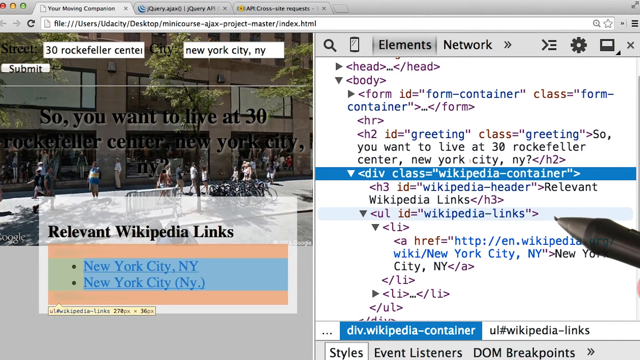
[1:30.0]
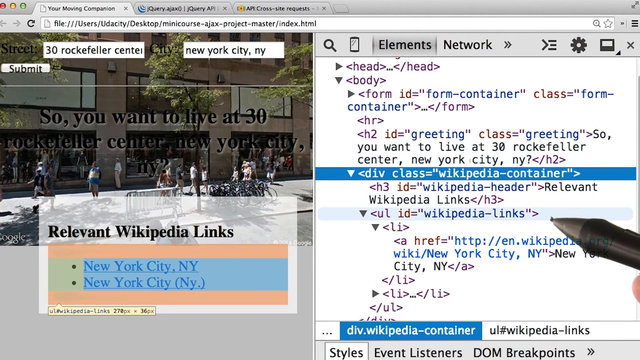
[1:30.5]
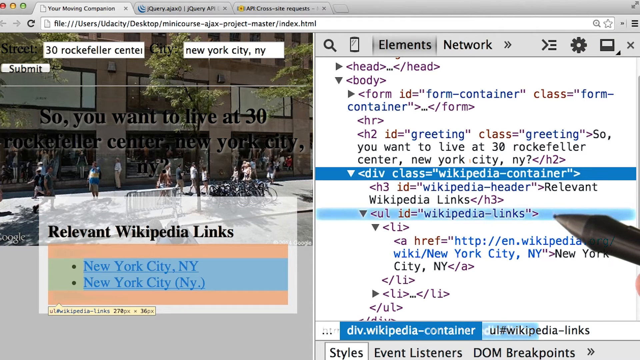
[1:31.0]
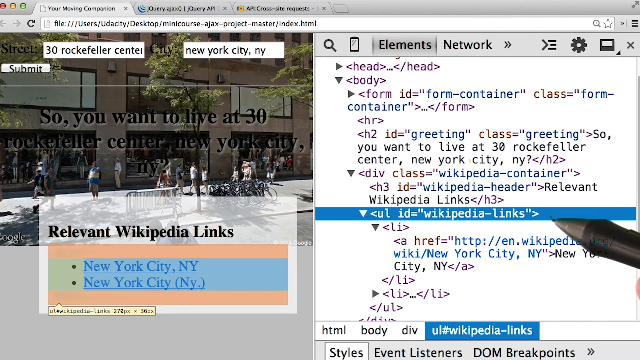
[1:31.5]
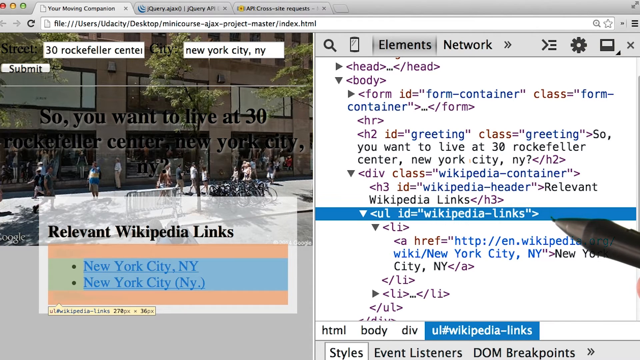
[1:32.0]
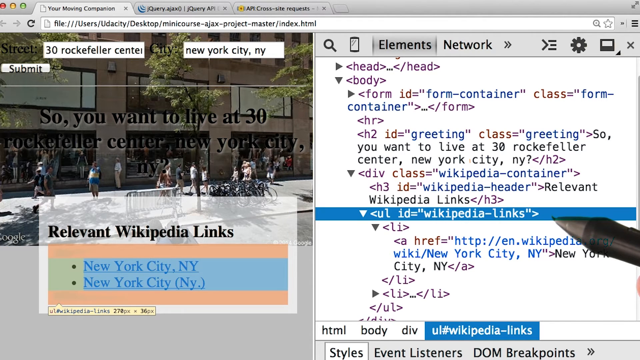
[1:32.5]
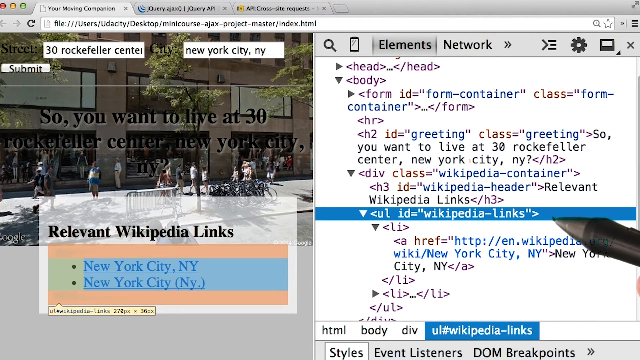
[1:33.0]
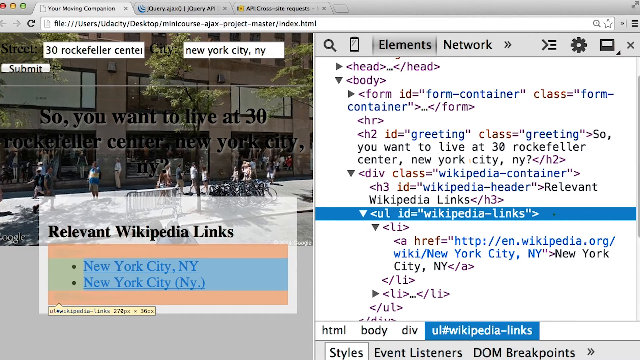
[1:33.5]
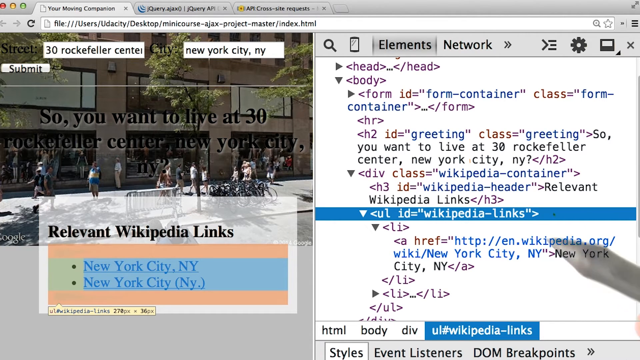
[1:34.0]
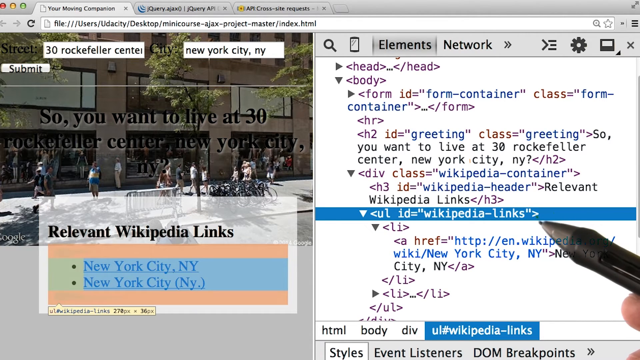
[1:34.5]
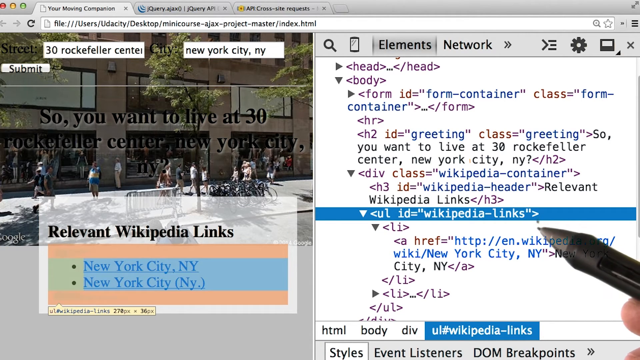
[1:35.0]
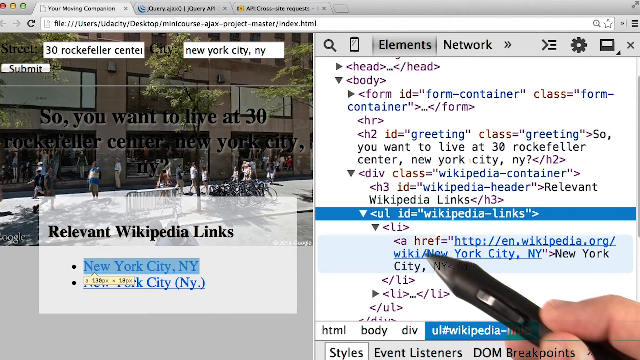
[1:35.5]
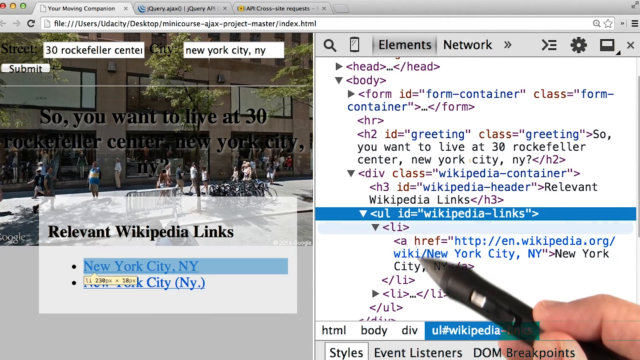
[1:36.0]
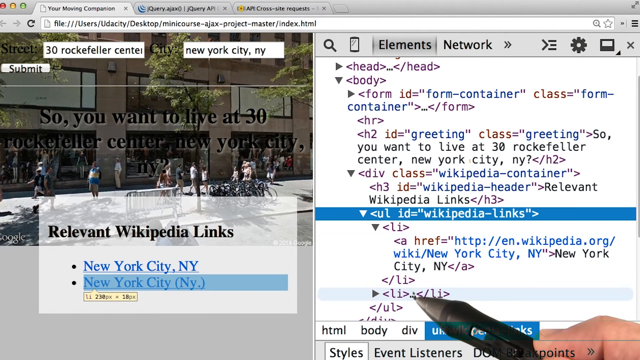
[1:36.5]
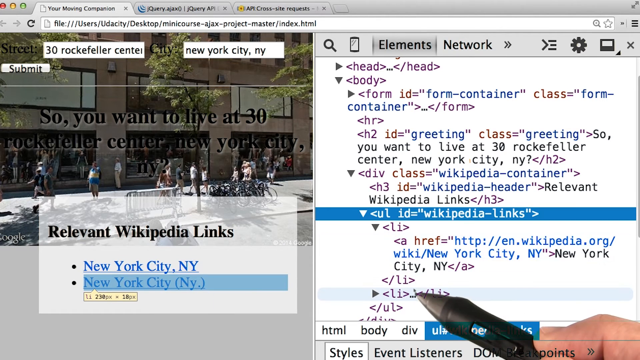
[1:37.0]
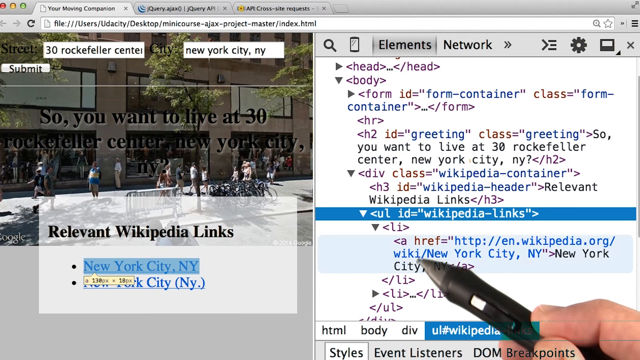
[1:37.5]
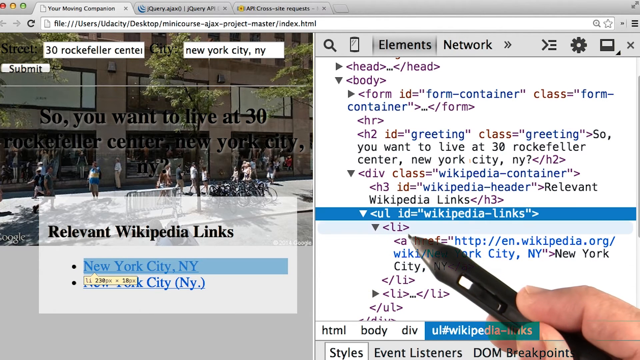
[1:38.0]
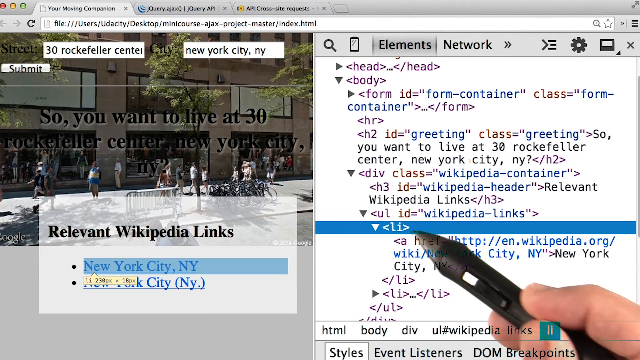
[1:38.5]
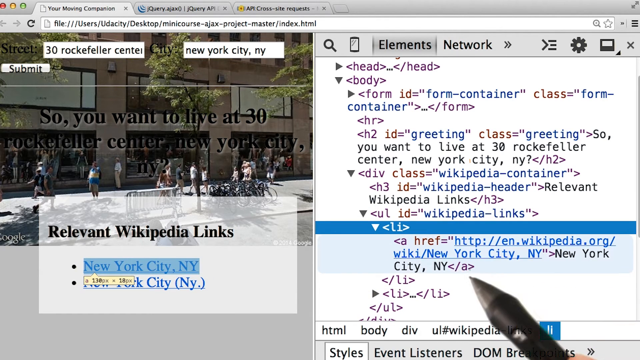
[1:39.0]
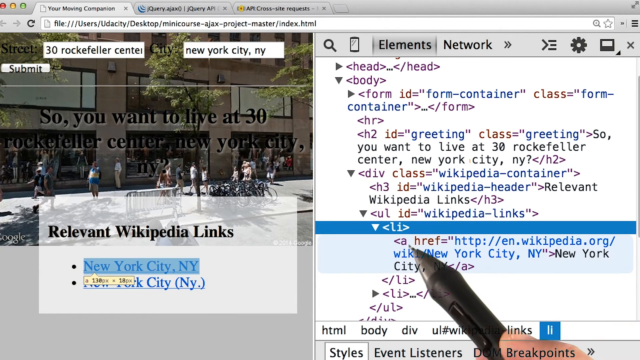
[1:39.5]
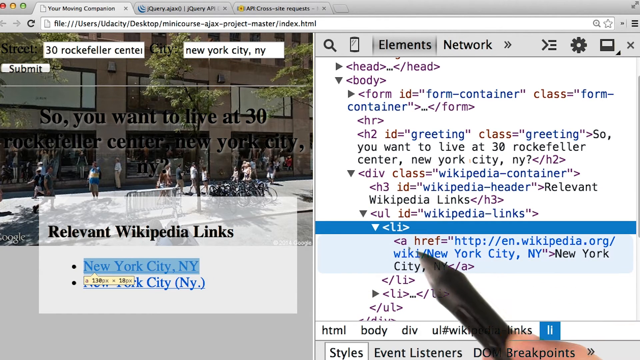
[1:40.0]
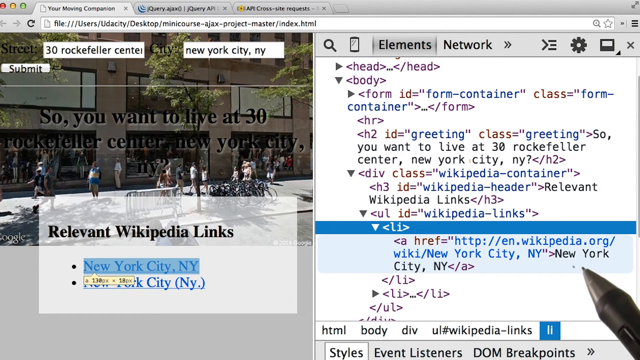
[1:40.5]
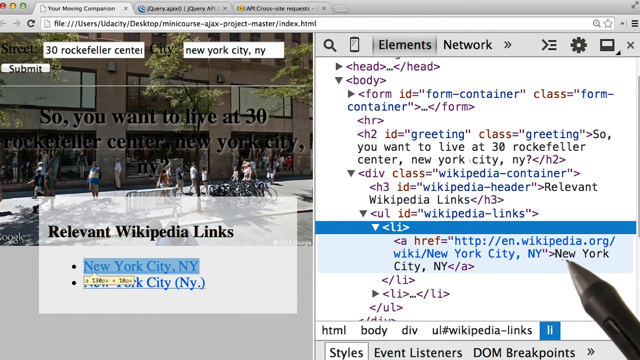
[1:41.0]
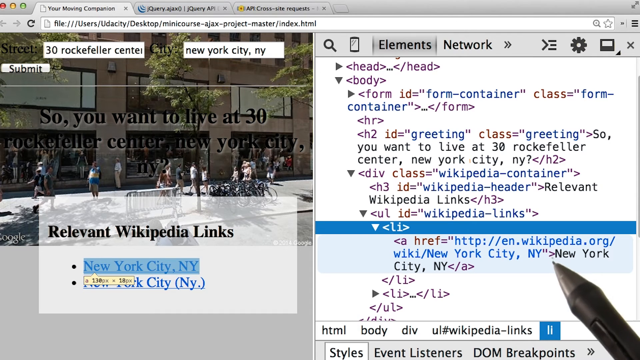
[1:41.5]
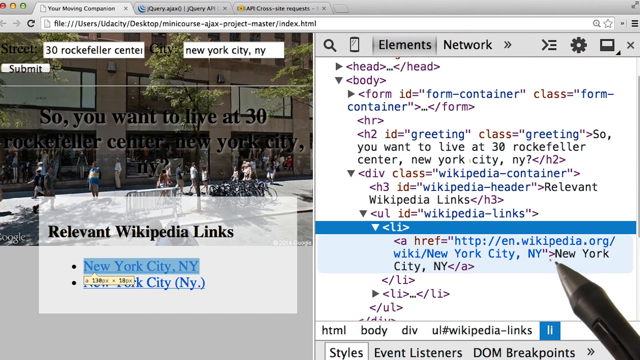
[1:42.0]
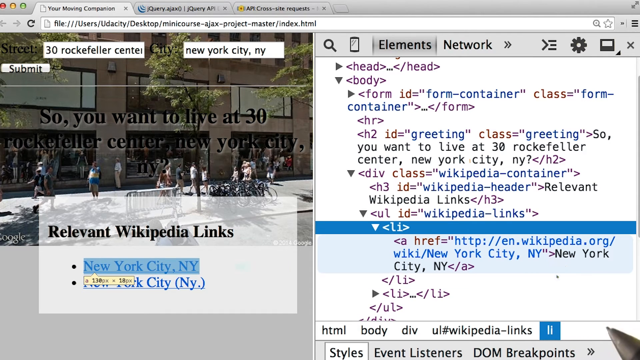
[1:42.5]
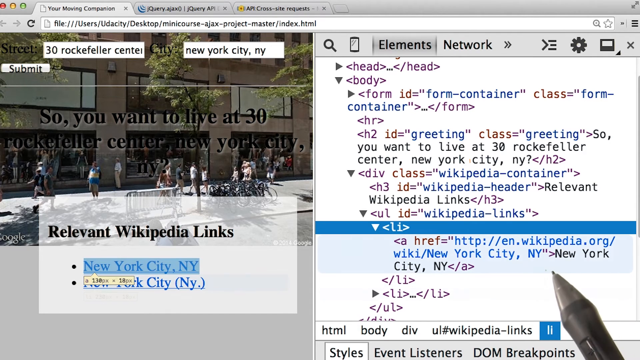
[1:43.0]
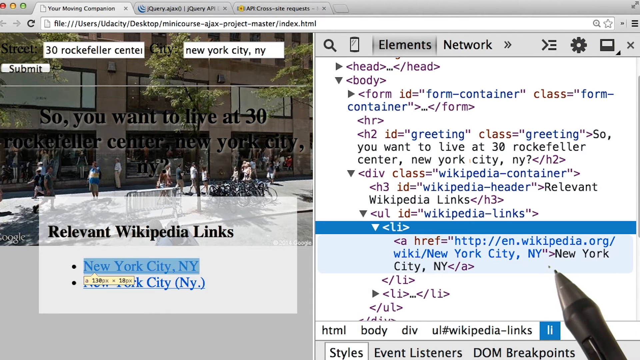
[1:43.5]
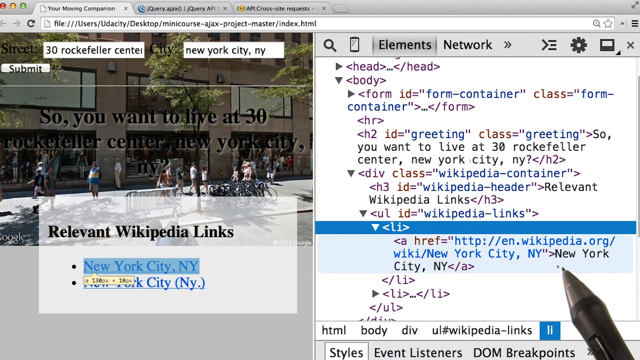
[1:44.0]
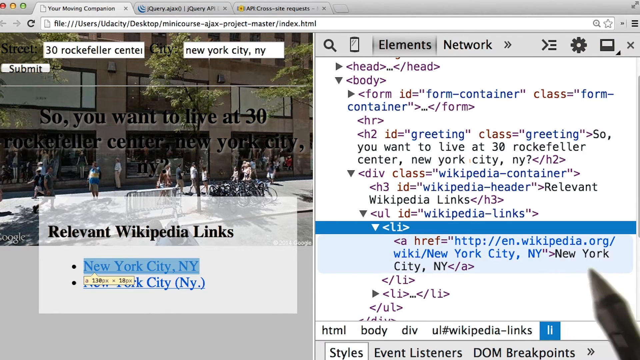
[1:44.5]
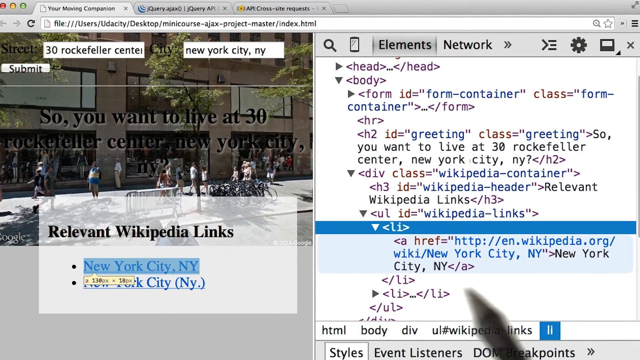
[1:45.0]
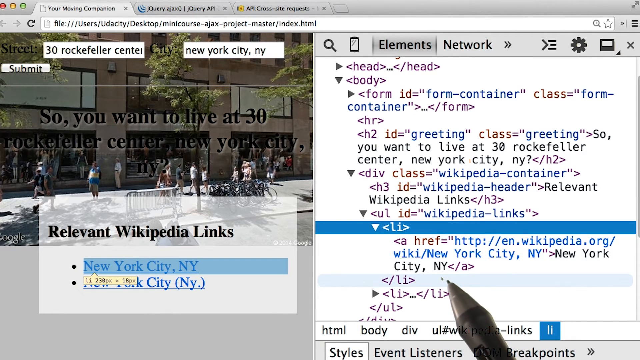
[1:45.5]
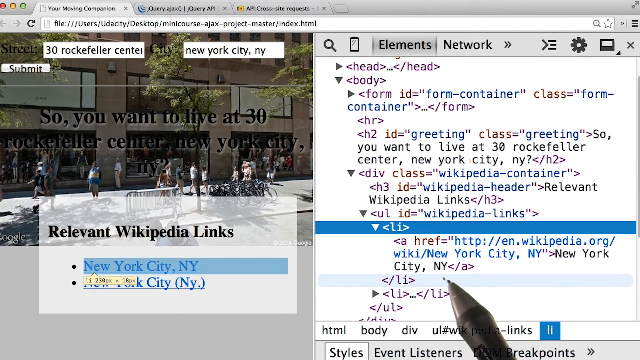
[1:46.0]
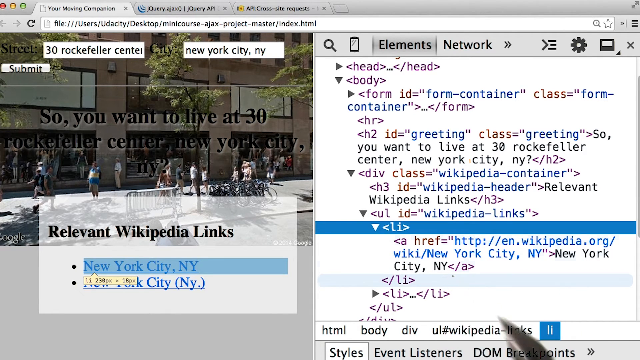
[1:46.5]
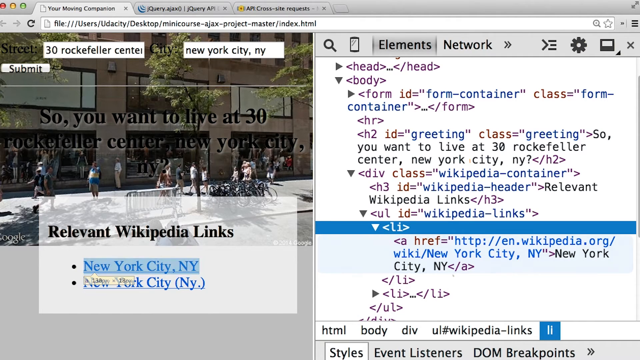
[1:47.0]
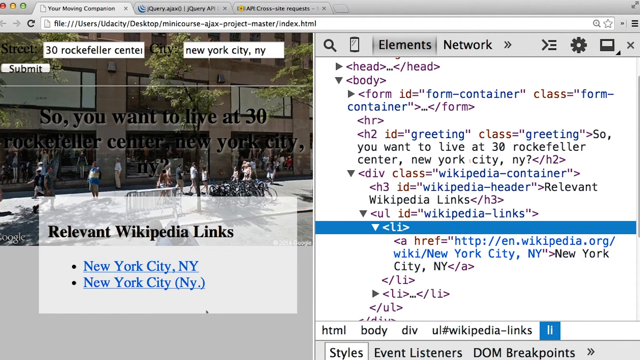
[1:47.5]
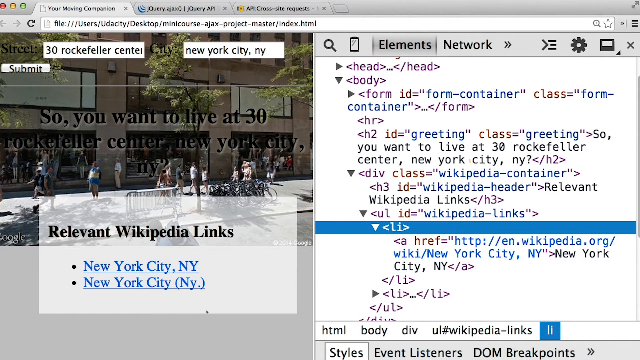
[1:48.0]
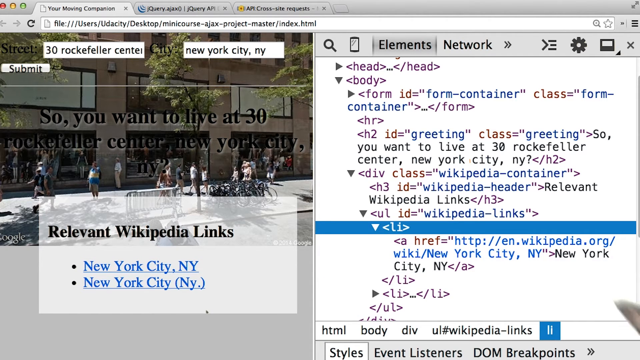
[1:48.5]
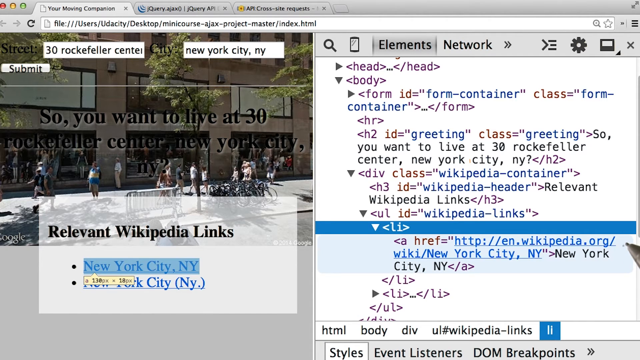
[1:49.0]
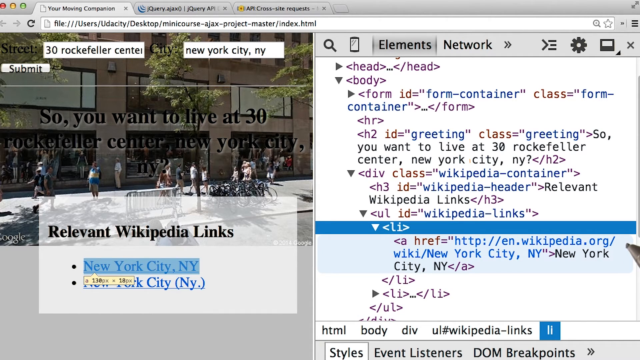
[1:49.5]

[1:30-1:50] Thirty Rockefeller Center in New York City is shown, with people walking by the building. Underneath, text reads "relevant Wikipedia links," with "New York City, New York" listed twice. The right side shows a lot of information, with "Wikipedia links" highlighted. Somebody's pencil puts a dot under the Wikipedia links and a dot under New York. The first dot is near the links; then the pencil is drawn down to reach another link, and dots are made randomly all over. As soon as the dots are made, they disappear.